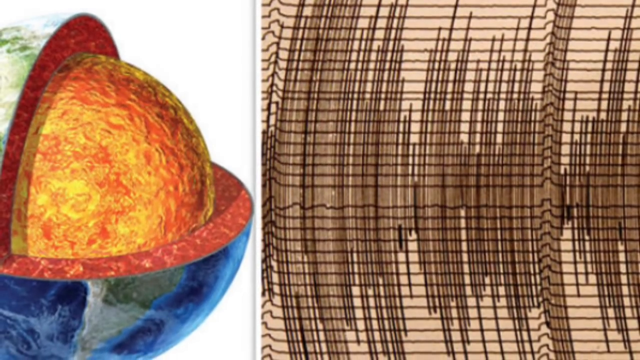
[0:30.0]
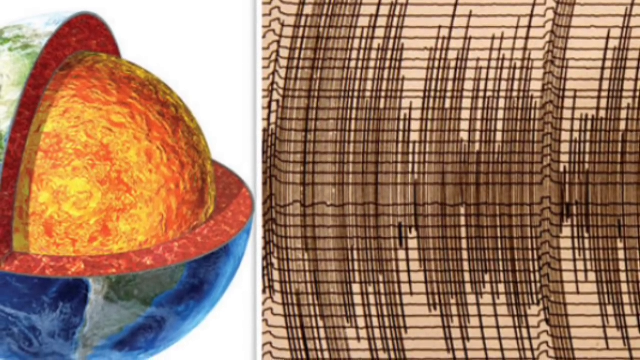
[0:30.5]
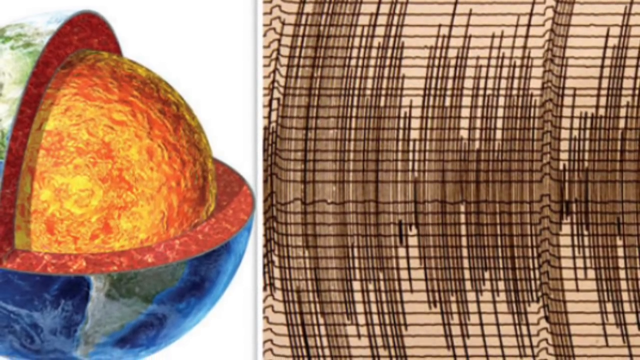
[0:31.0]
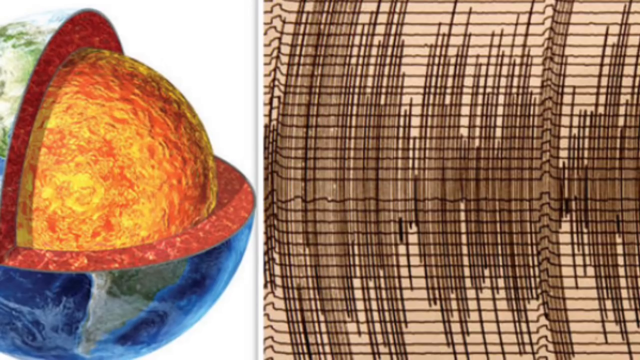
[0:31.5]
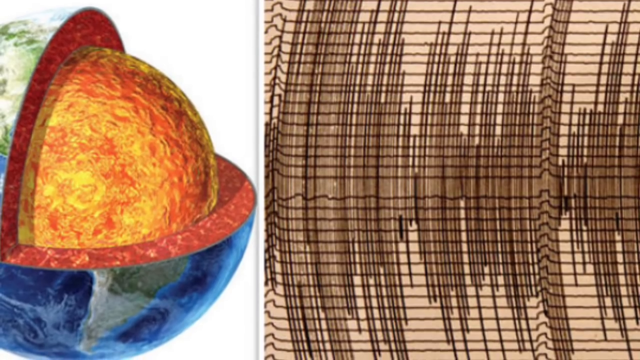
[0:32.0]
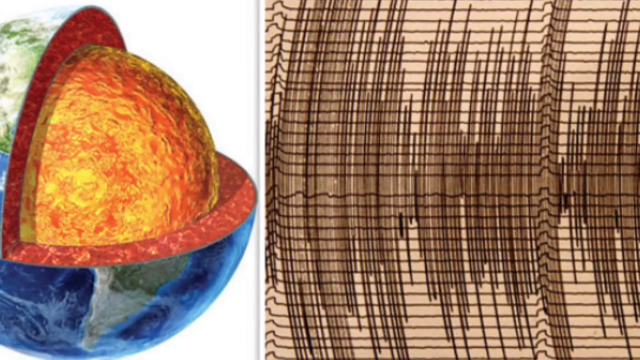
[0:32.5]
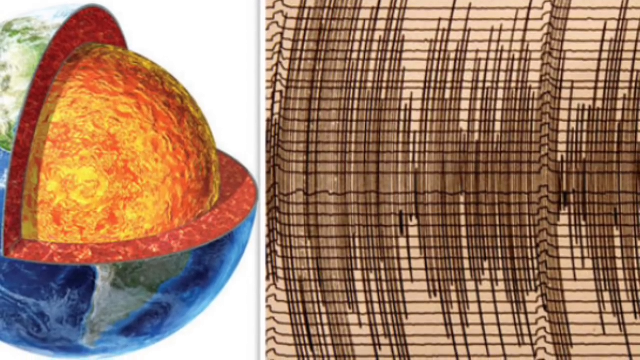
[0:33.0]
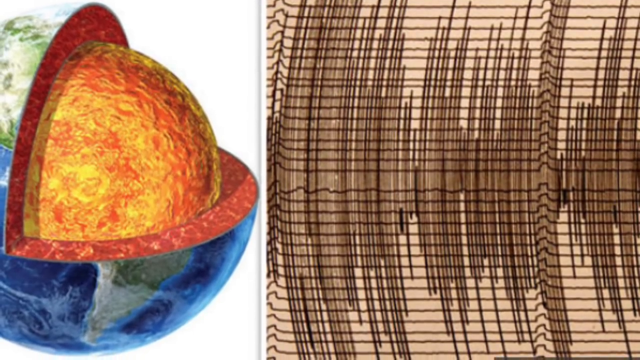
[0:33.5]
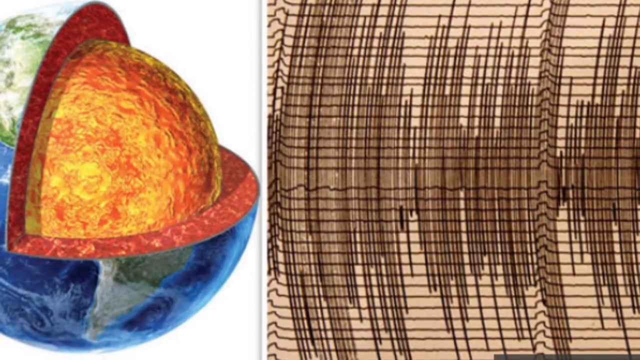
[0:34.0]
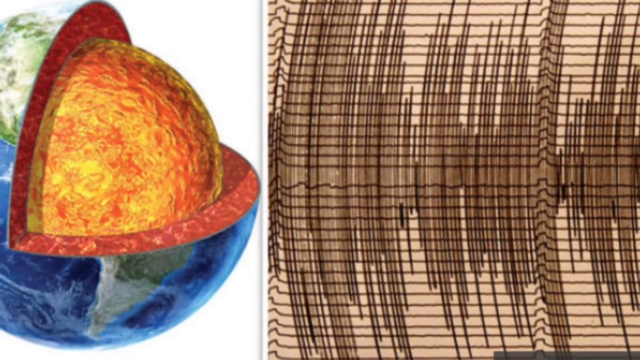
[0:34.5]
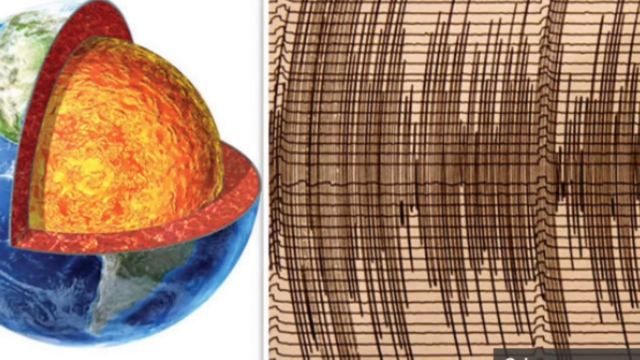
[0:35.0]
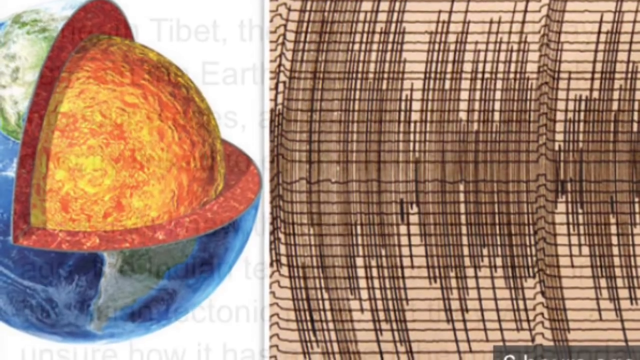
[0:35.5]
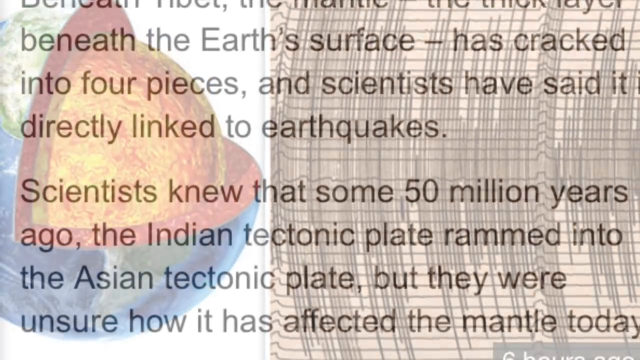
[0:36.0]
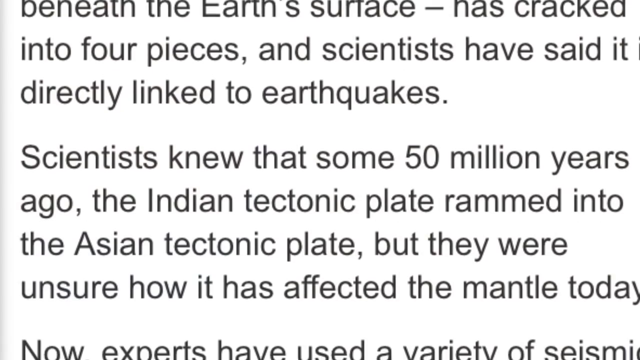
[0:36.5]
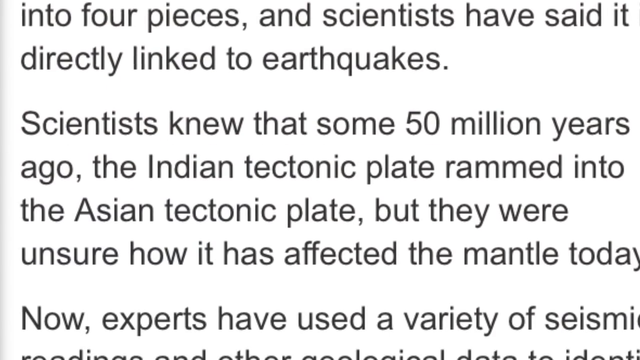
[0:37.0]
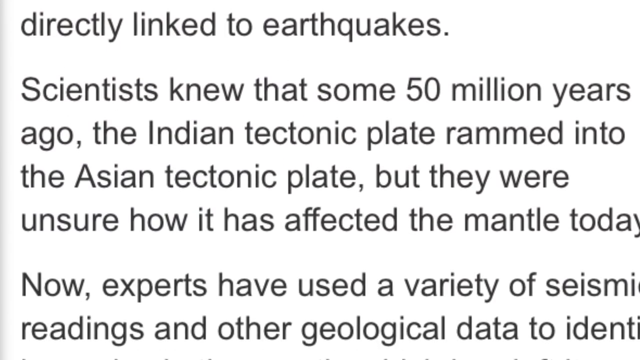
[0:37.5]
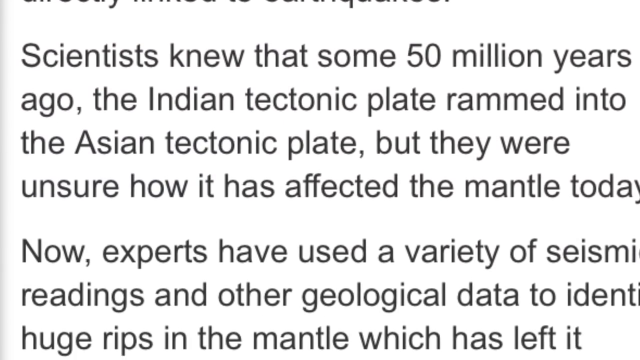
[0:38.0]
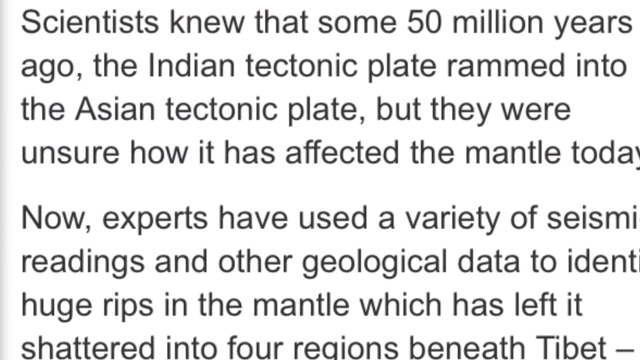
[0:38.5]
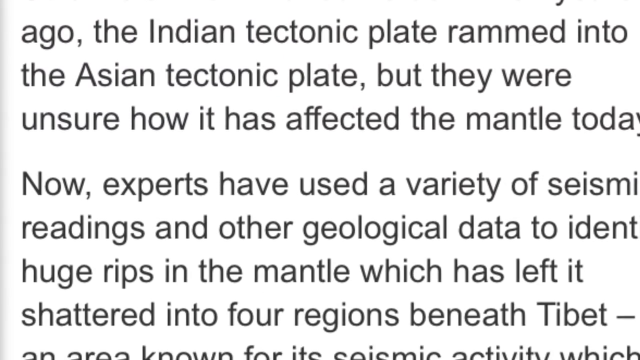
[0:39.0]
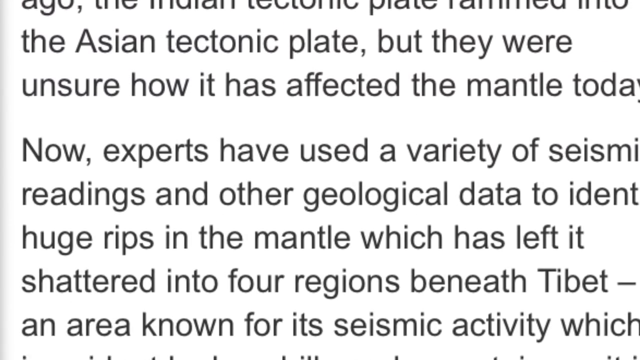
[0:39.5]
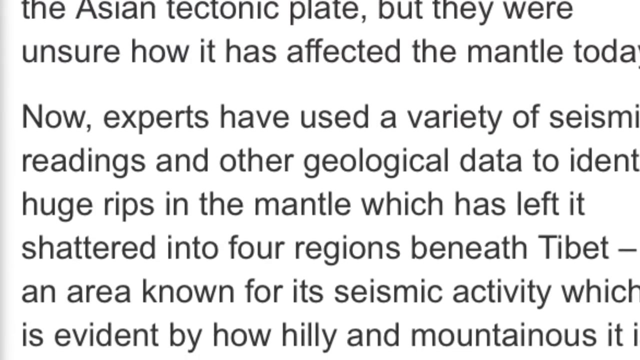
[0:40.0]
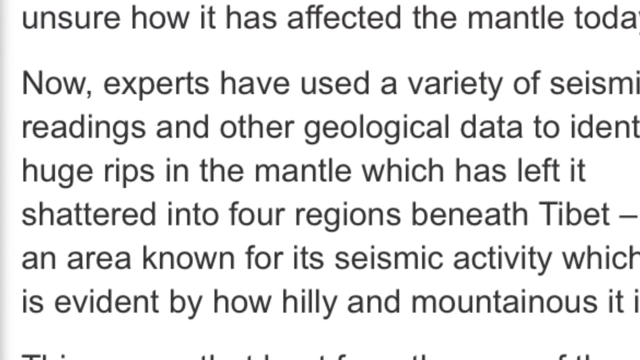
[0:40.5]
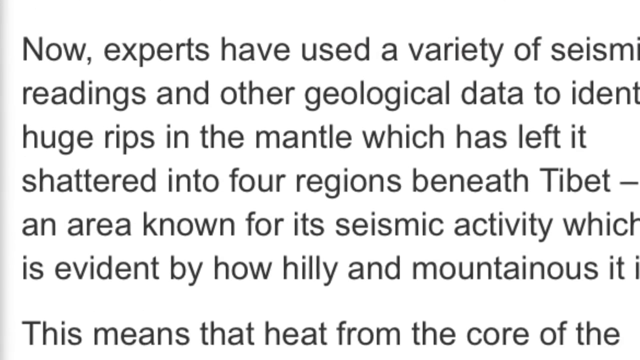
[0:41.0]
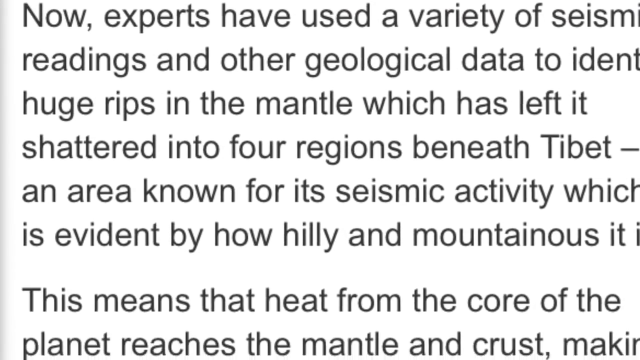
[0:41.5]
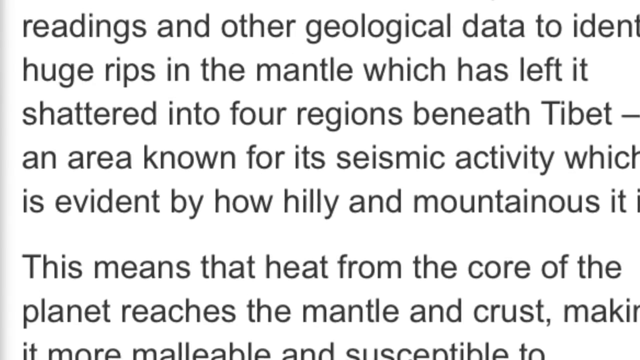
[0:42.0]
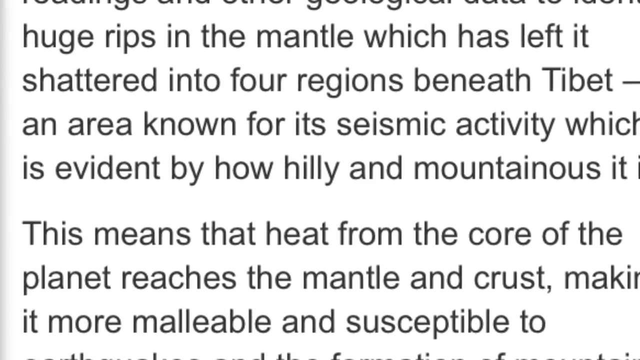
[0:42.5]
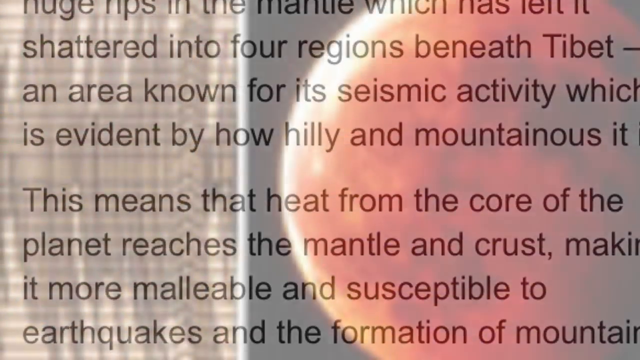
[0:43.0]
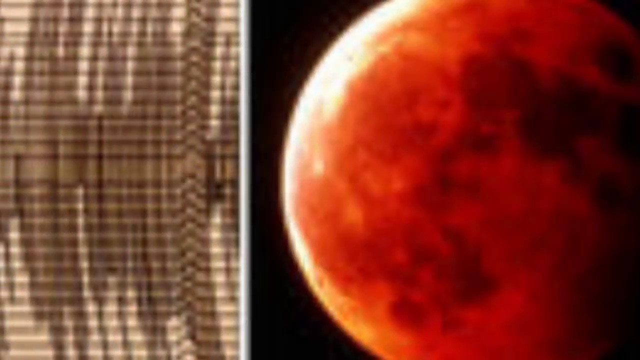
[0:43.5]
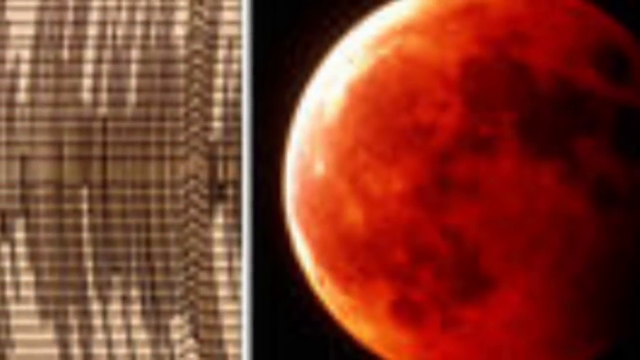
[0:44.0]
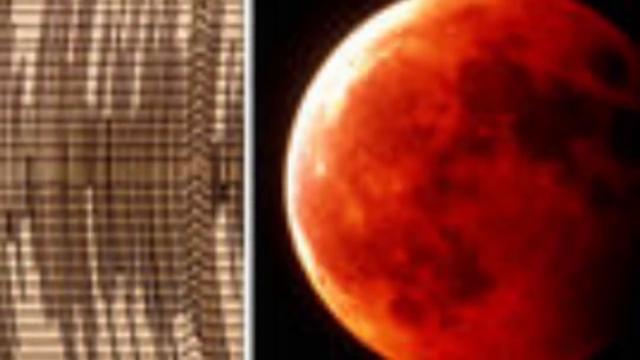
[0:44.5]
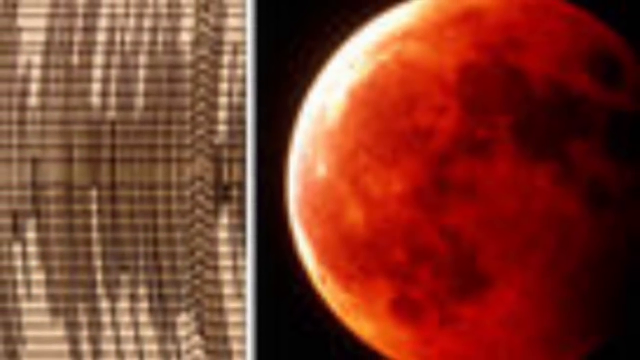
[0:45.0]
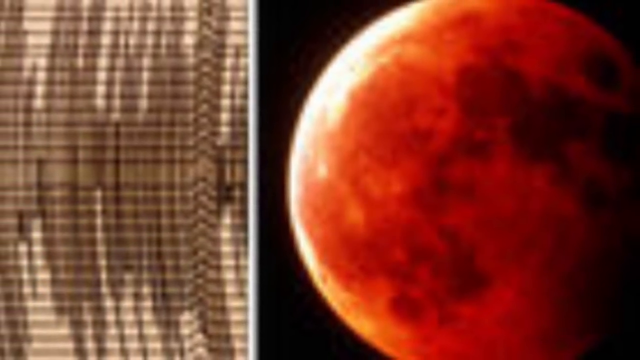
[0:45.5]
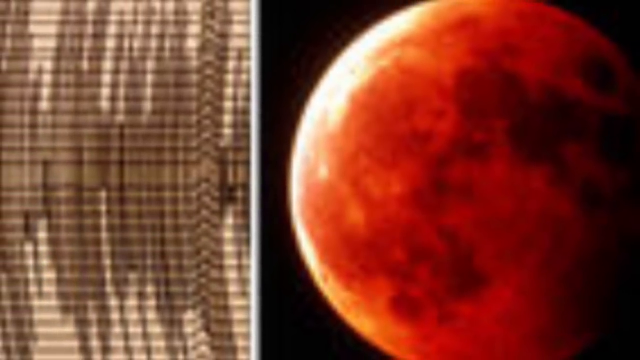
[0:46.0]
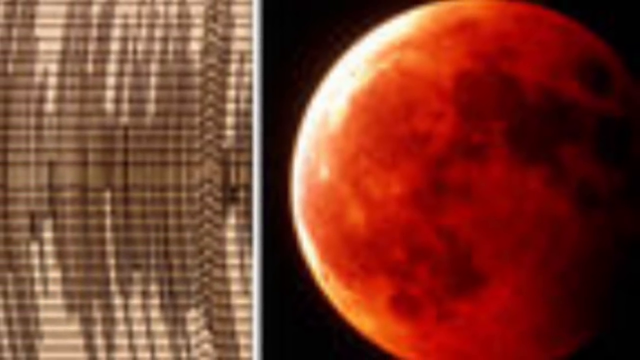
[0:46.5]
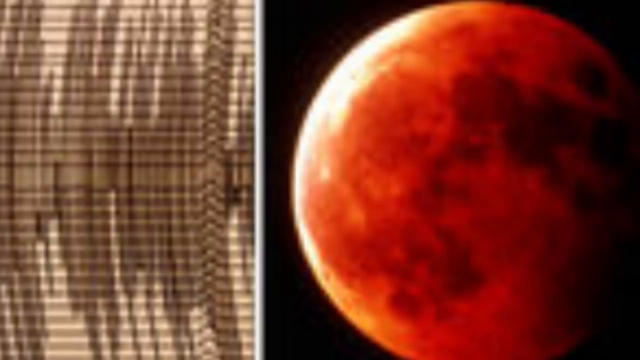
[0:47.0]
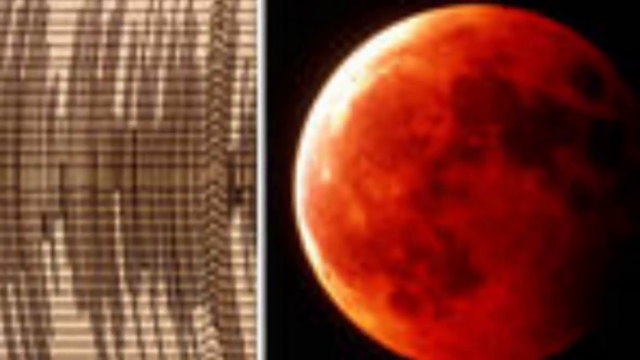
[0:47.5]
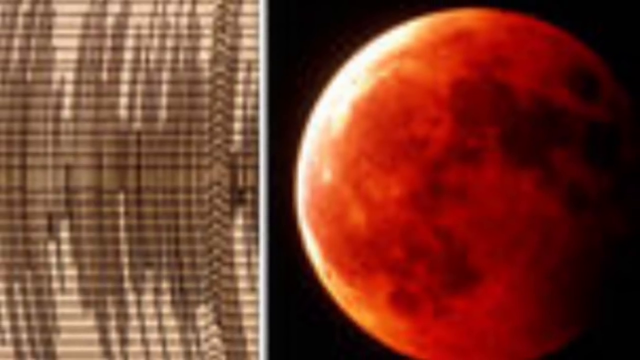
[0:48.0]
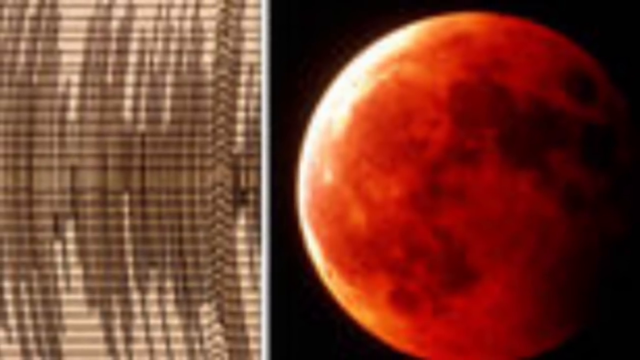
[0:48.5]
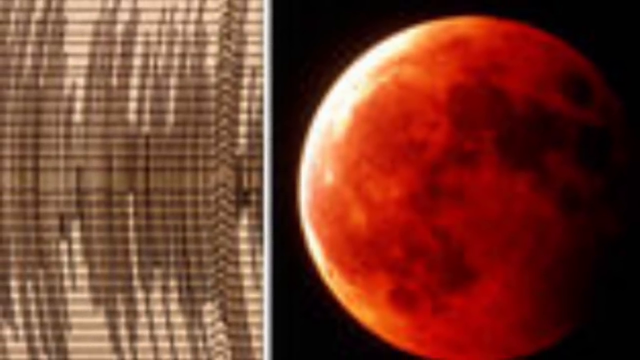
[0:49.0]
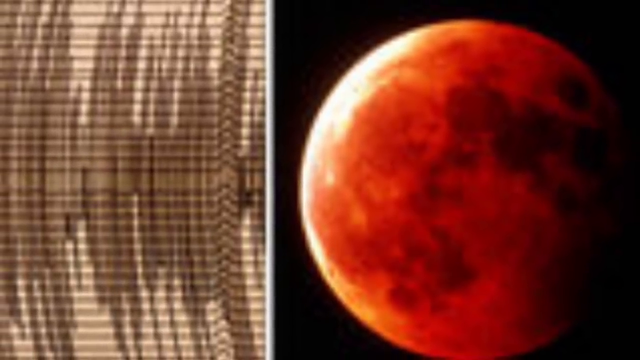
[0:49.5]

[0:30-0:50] A graphic of the earth shows a slice cut into it, into the mantle, with a chunk taken out to reveal a hot inner ball at the core. Next to it is something almost like a cardiogram, apparently measuring. The view flips back to a news article, which reads: "into four pieces, scientists have said it directly linked to earthquakes. Scientists knew that some 50 million years ago, the Indian tectonic plate rammed into the Asian tectonic plate, but they were unsure how it affected the mantle. Now experts have used a variety of readings and other geological data to identify huge rips in the mantle, which has left it shattered into four regions beneath Tibet".